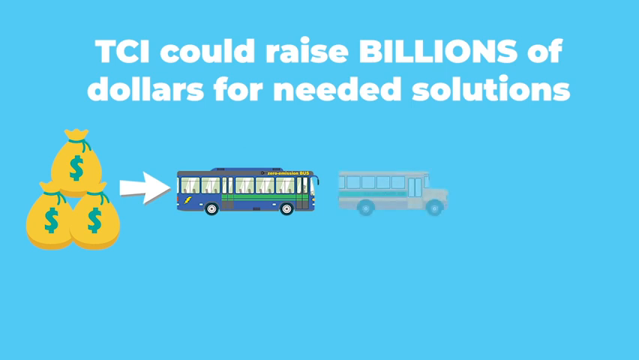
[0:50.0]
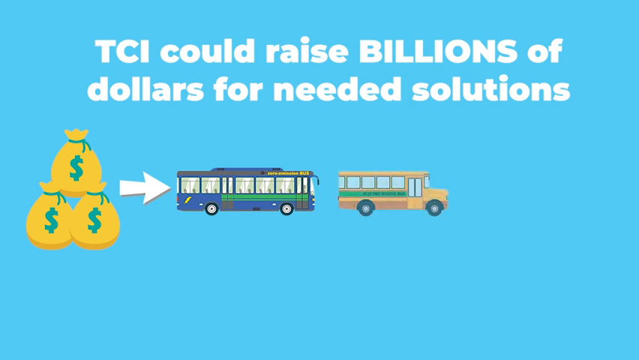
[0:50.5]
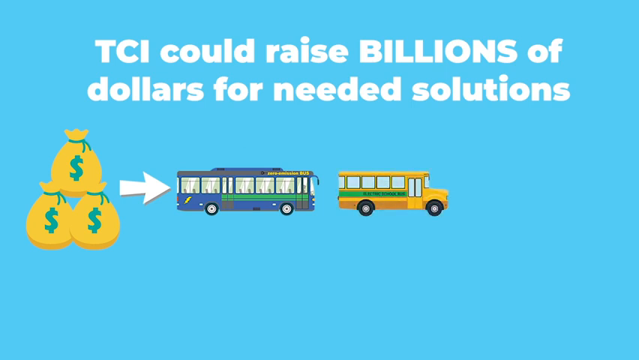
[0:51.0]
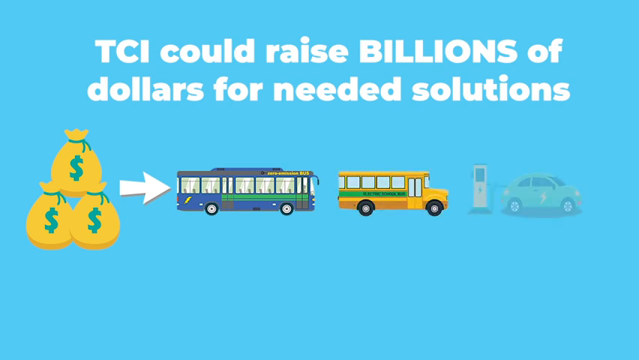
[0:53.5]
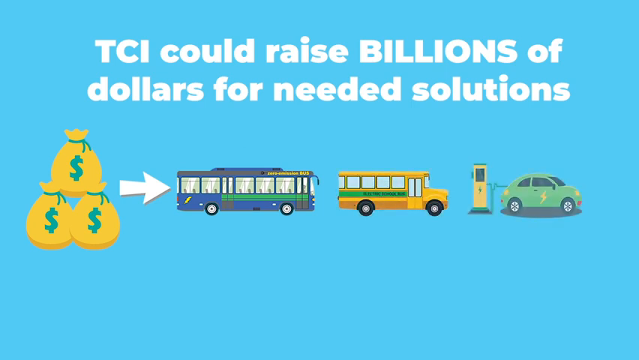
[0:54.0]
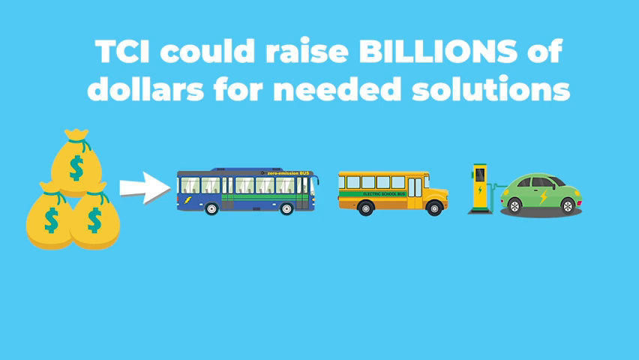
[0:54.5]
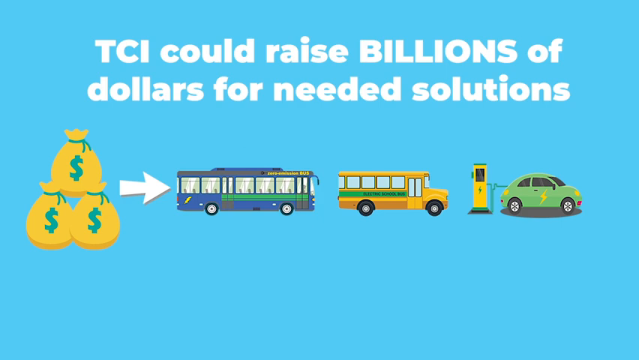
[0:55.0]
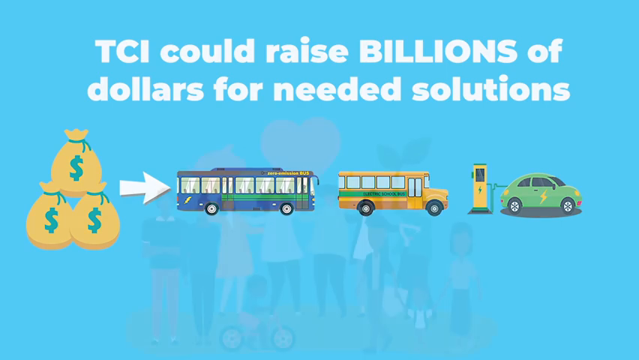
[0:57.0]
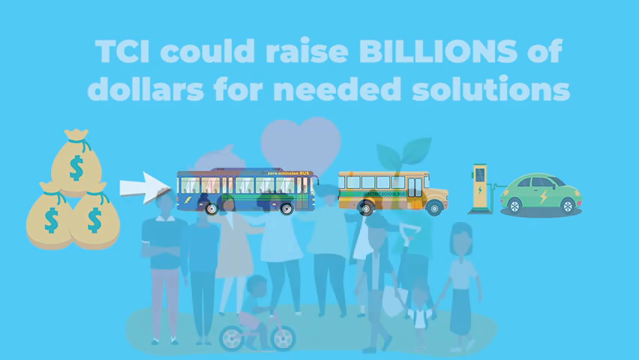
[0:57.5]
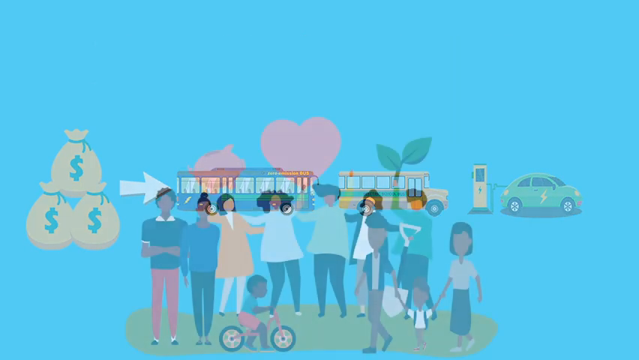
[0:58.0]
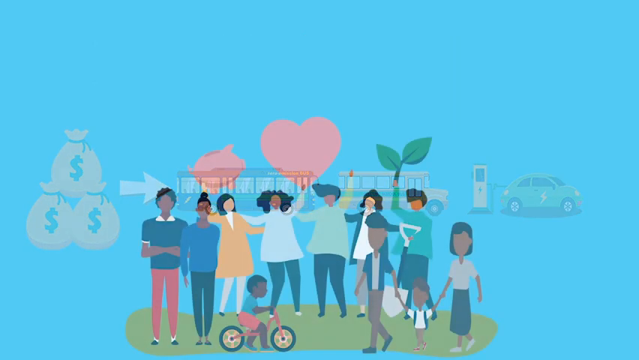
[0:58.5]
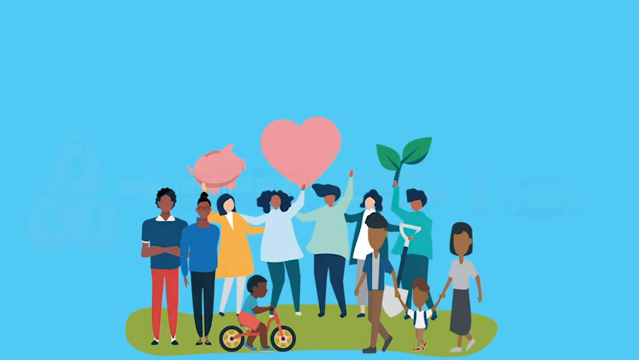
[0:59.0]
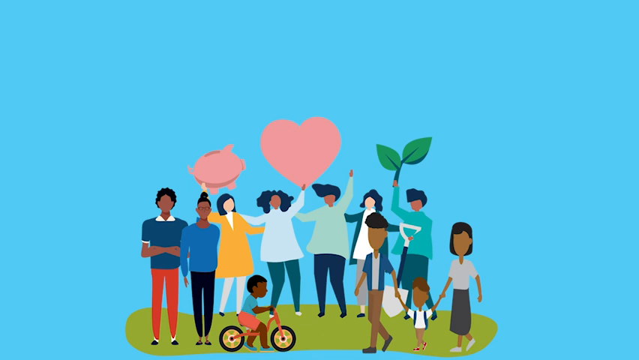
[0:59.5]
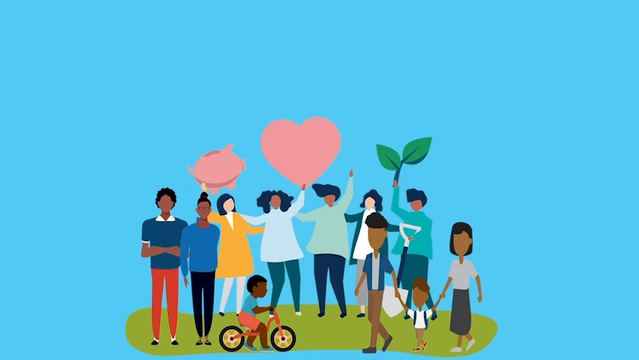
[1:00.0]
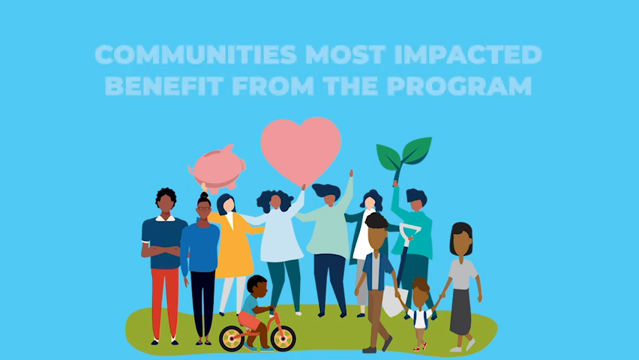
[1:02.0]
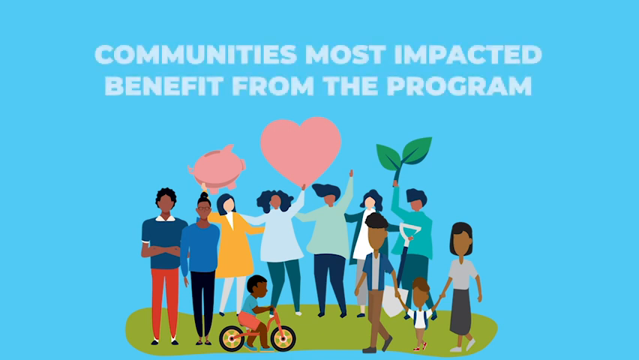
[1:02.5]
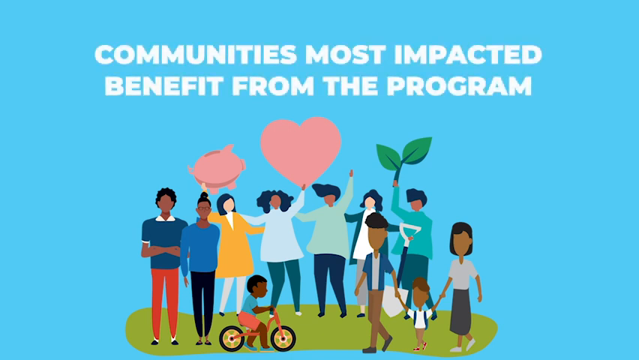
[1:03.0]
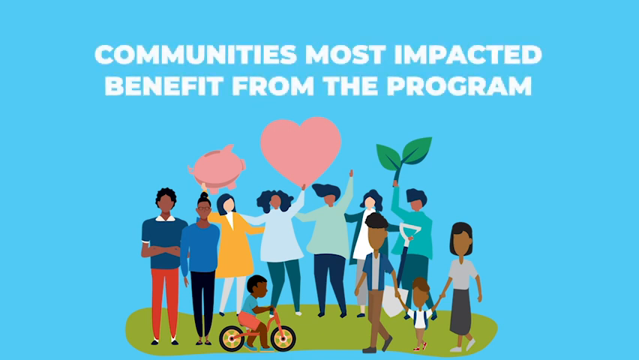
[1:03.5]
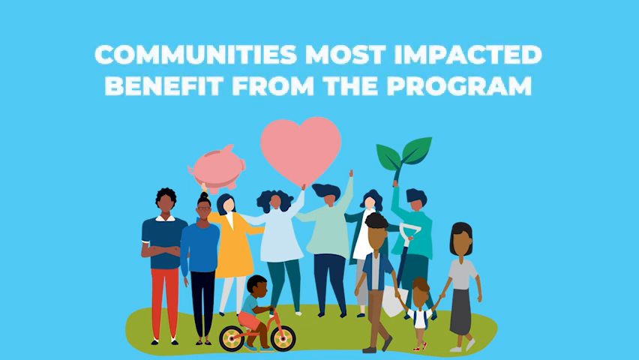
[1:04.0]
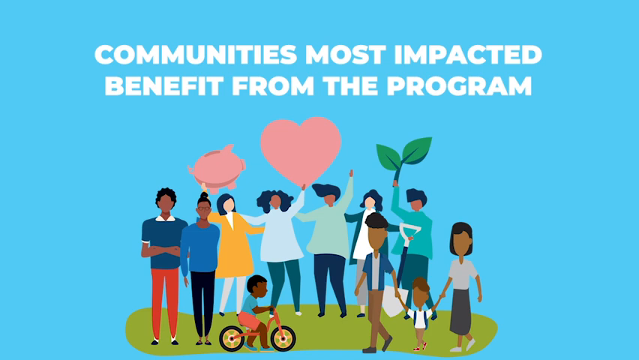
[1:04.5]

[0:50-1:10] The page reading "TCI could raise billions of dollars for needed solutions" shows three bags of money with an arrow pointing to a city transportation bus. A yellow school bus with green writing down the side pops up, followed by a small, rounded, light green vehicle similar to a VW bug, pulled up to a charging station, with lightning bolts on its side, apparently representing an electric vehicle. The video then transitions to a light blue page with flat, two-dimensional, faceless people of different colors, seemingly meant to represent different ethnicities. They wear different colored clothes, including blue, white and green tops, and include both young and old, from young children to older adults. They hold things over their heads: one person holds up a twig with two leaves, one a heart, and another a piggy bank. Text reads "communities most impacted benefit from the program."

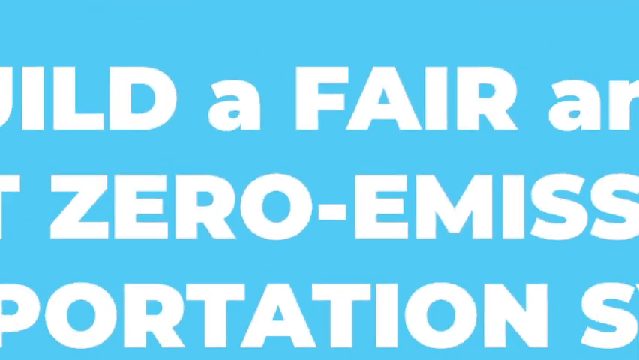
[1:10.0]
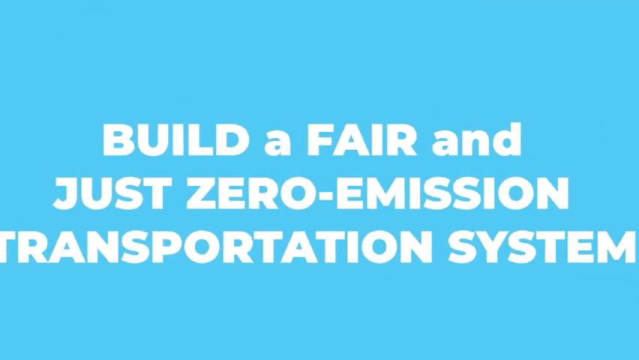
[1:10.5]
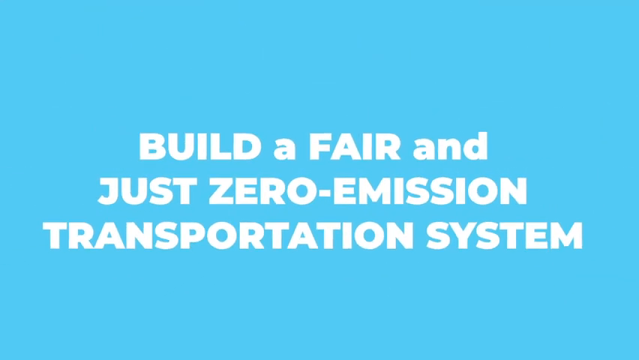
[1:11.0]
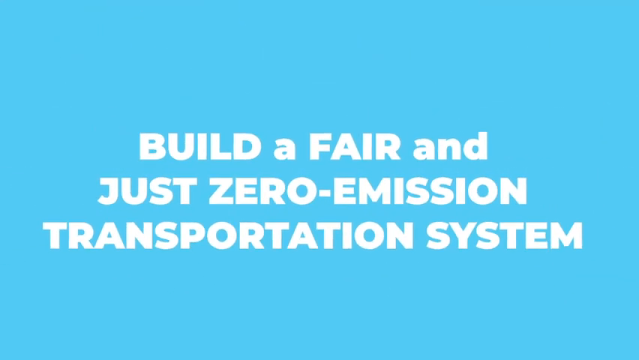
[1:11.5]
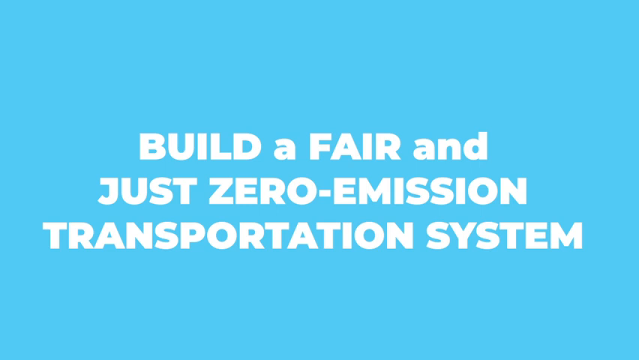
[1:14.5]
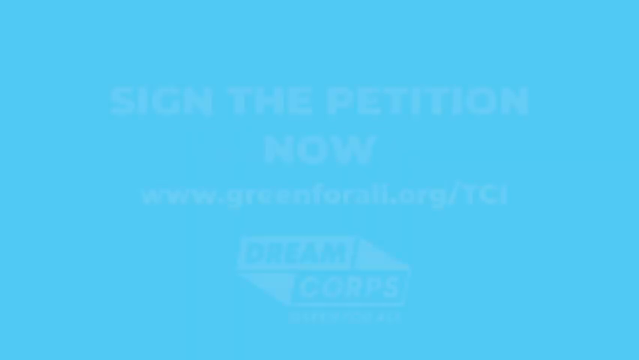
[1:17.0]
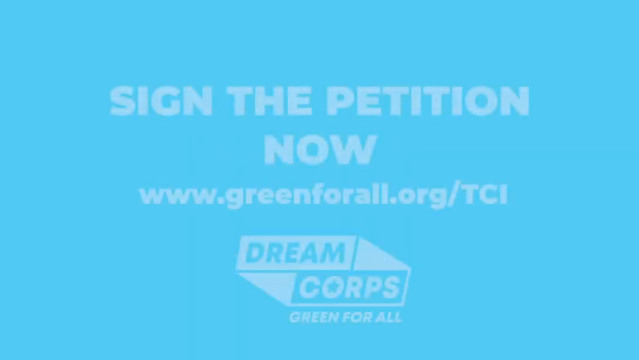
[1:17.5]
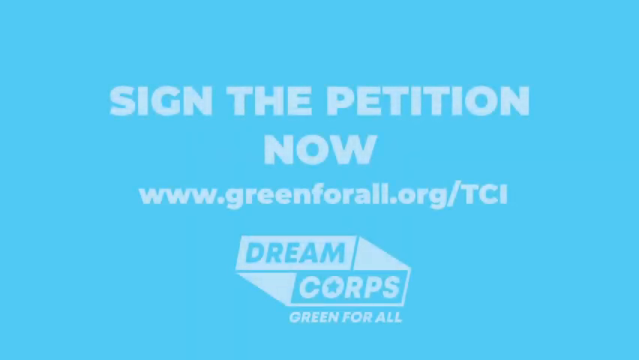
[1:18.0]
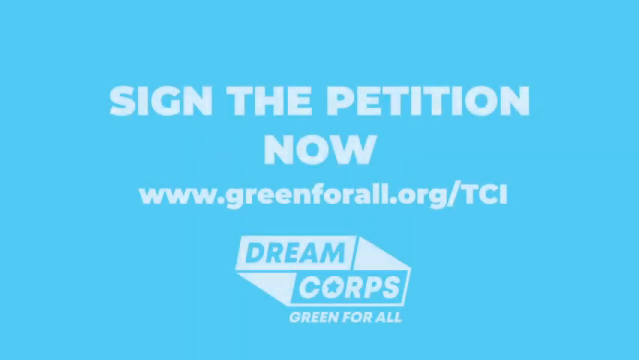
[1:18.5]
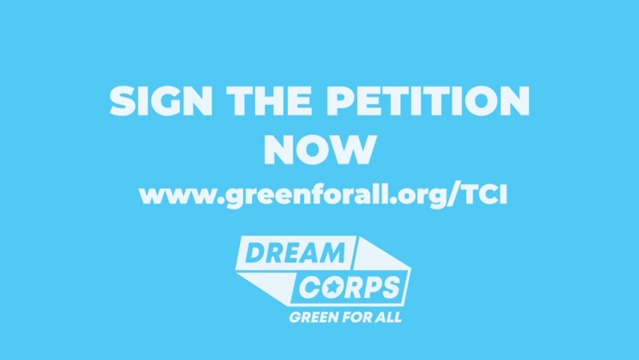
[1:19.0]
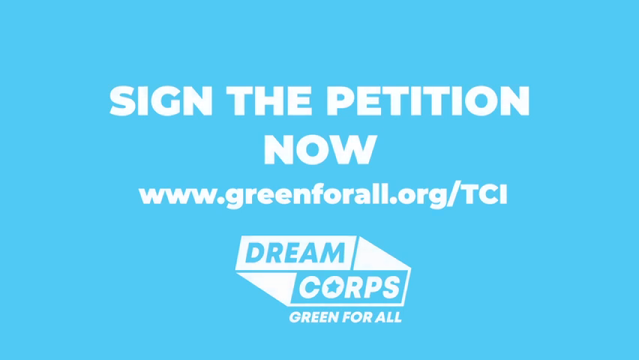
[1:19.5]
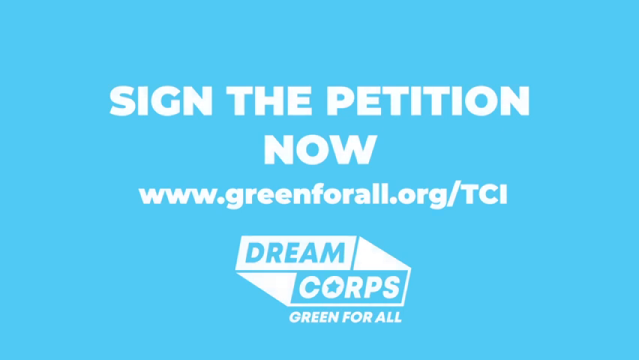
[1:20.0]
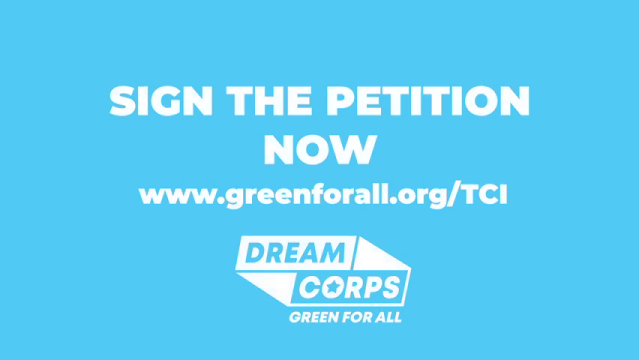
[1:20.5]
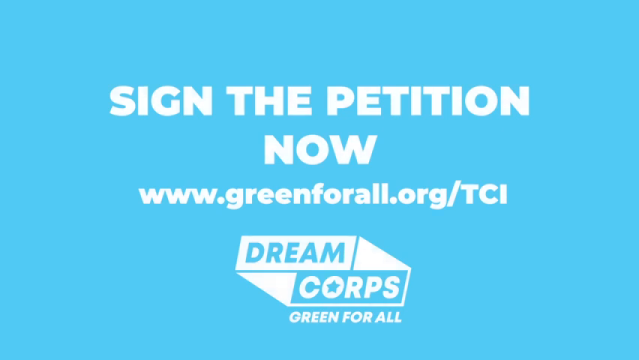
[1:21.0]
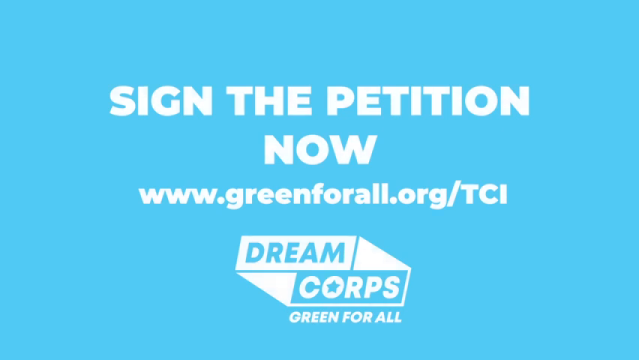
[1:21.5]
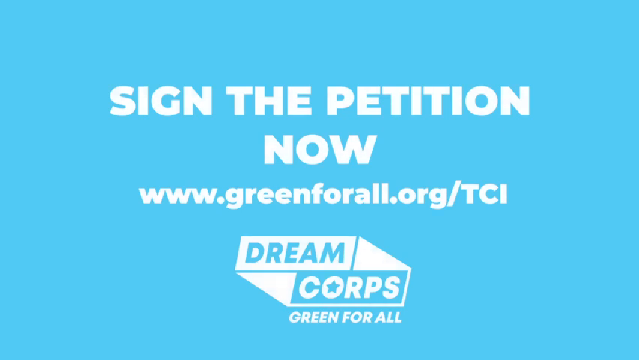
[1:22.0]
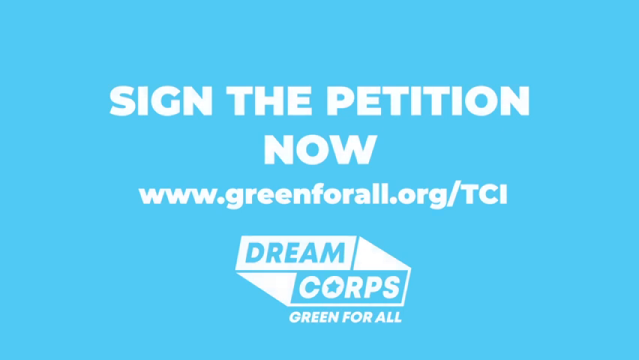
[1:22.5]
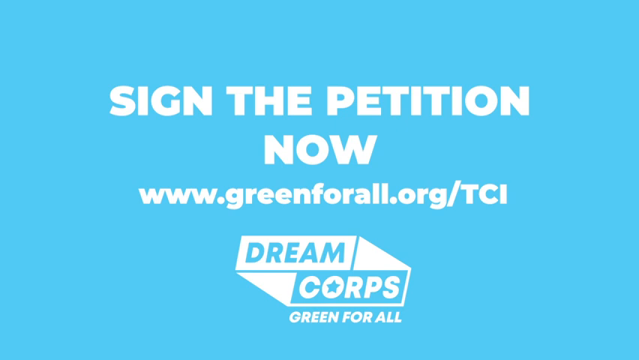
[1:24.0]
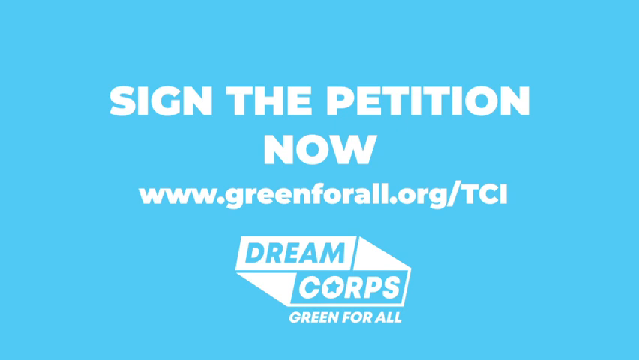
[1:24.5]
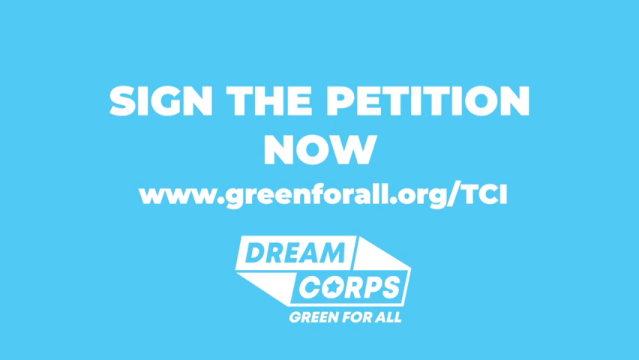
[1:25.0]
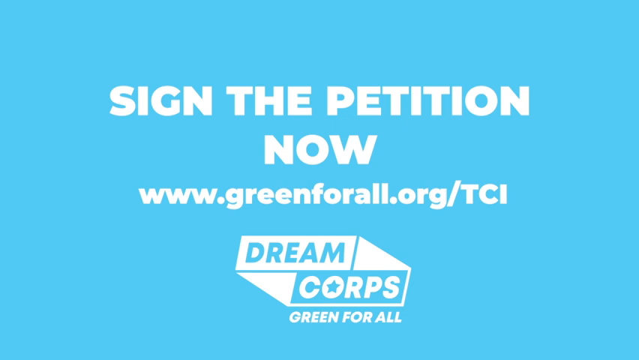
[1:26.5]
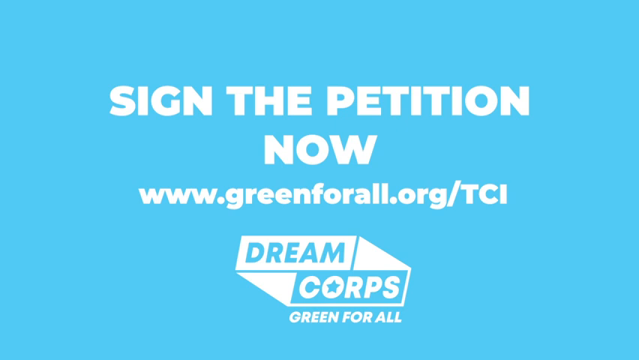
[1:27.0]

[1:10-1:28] On a blue background, white words read "build a fair and just zero emission transportation system." The white text then changes to "sign the petition now, www.greenforall.org\TCI." Below that is a logo that looks kind of like a box, reading "dream core," with "green for all" below it. The box is white; the word "dream" is in blue, and "core" is white on a blue background, with the center of the O shaped like a star.